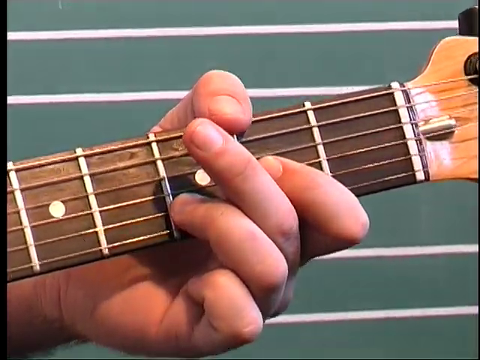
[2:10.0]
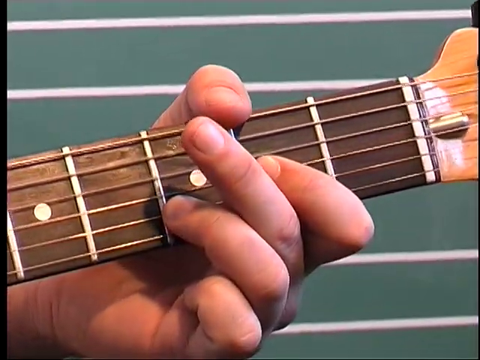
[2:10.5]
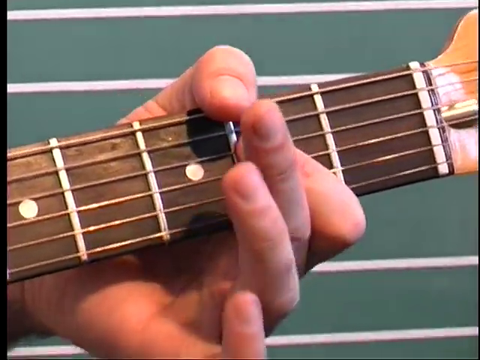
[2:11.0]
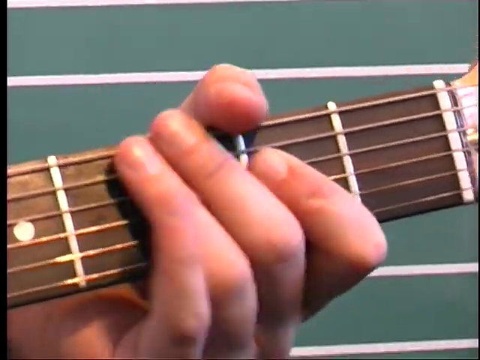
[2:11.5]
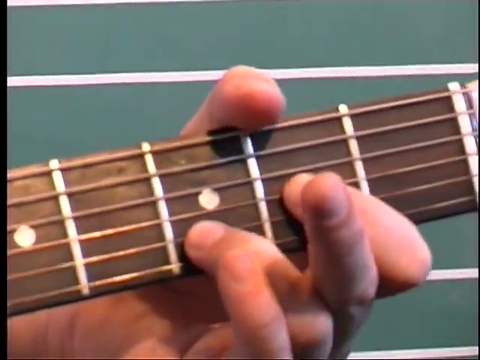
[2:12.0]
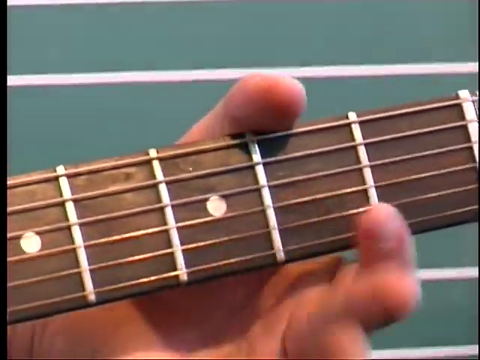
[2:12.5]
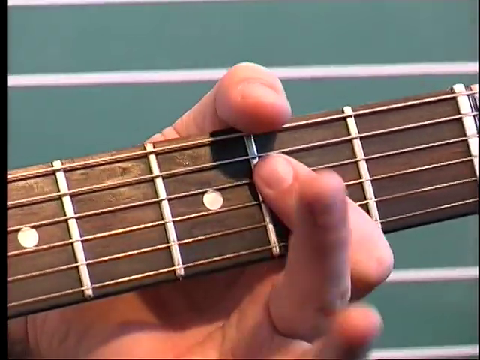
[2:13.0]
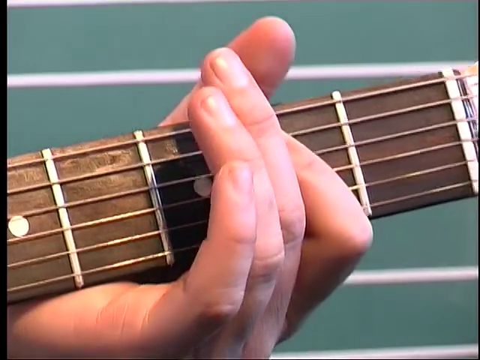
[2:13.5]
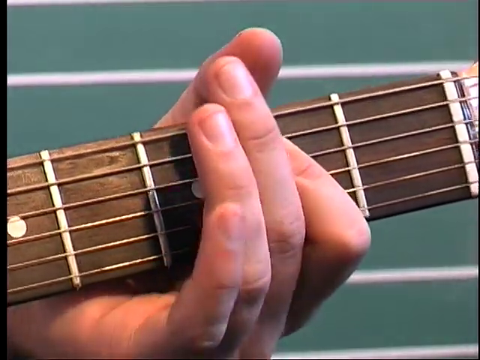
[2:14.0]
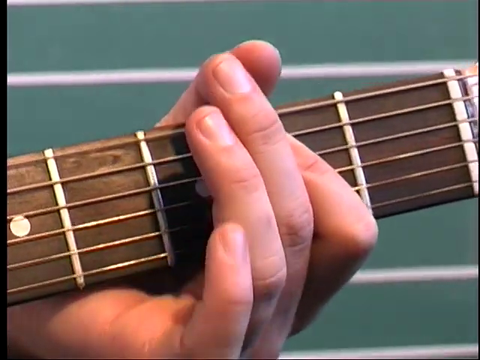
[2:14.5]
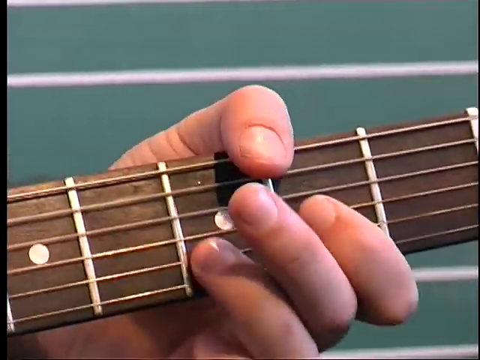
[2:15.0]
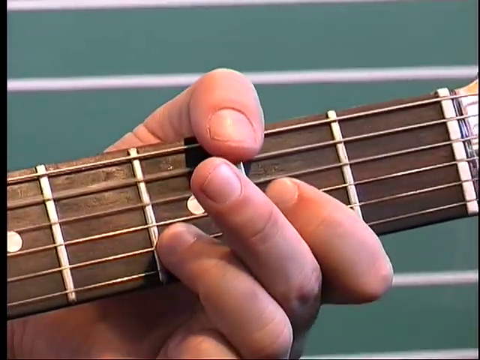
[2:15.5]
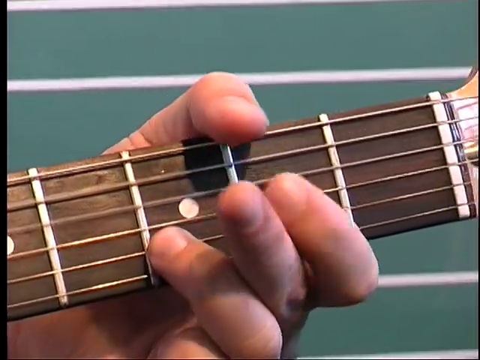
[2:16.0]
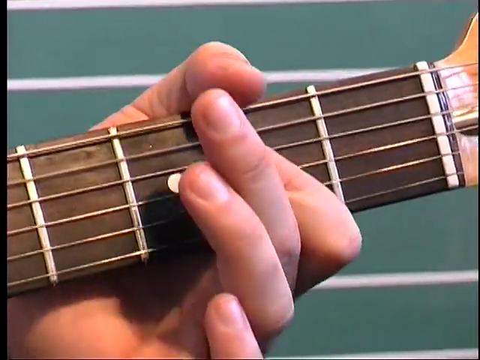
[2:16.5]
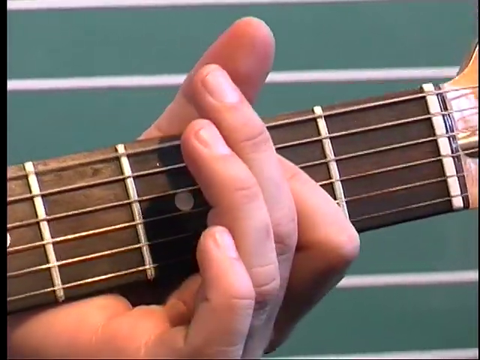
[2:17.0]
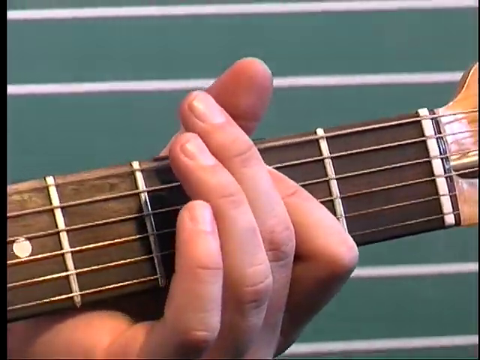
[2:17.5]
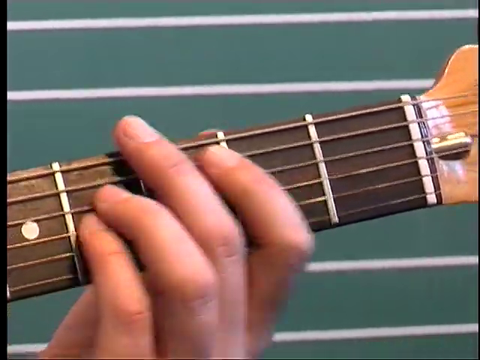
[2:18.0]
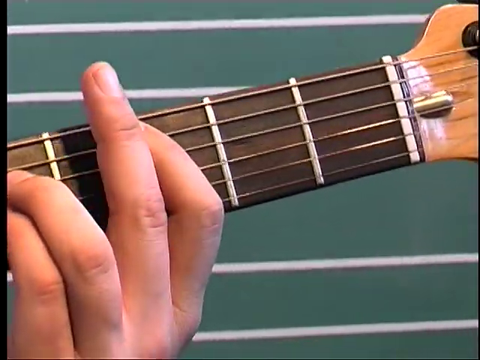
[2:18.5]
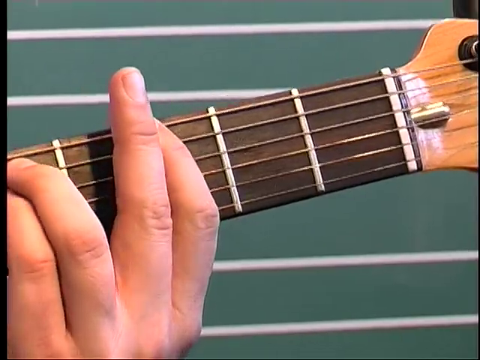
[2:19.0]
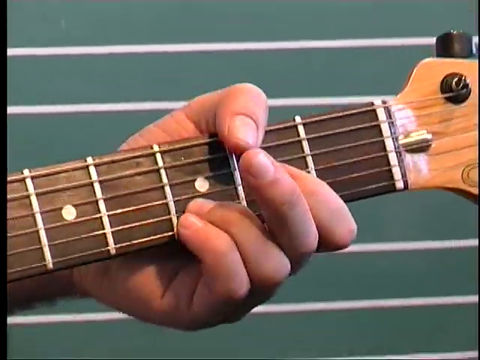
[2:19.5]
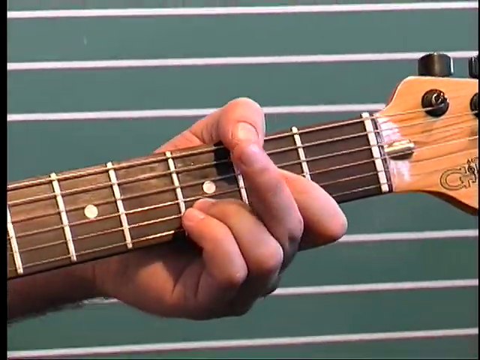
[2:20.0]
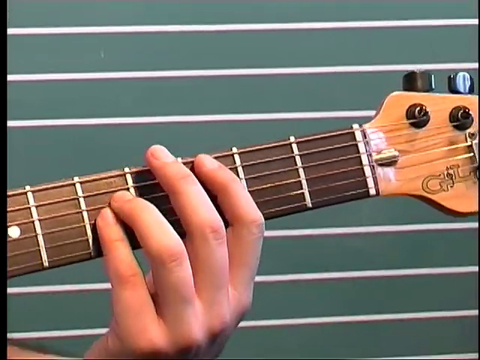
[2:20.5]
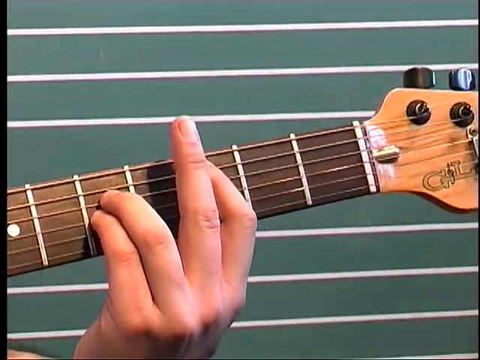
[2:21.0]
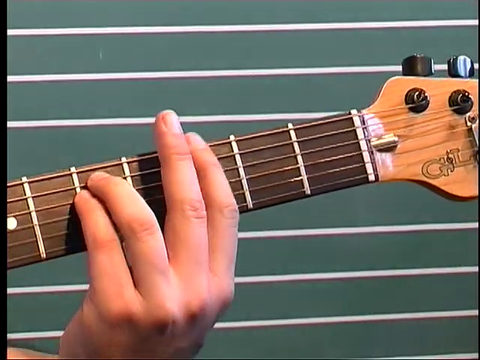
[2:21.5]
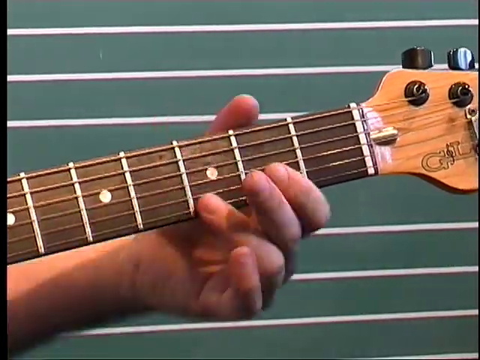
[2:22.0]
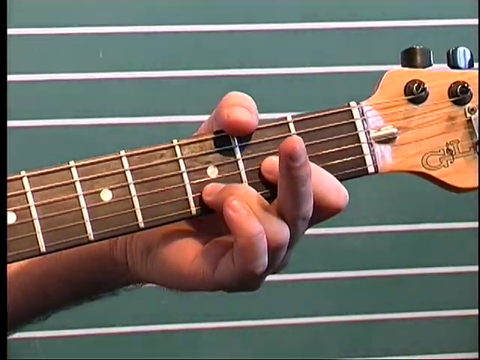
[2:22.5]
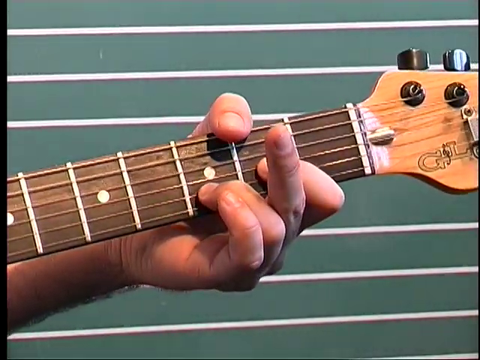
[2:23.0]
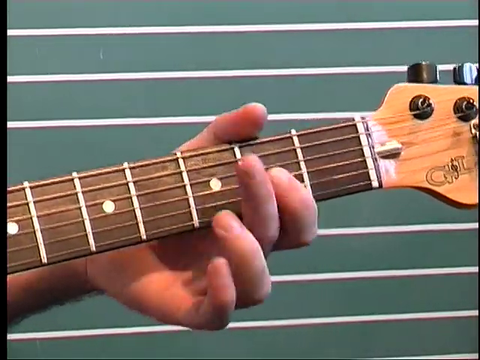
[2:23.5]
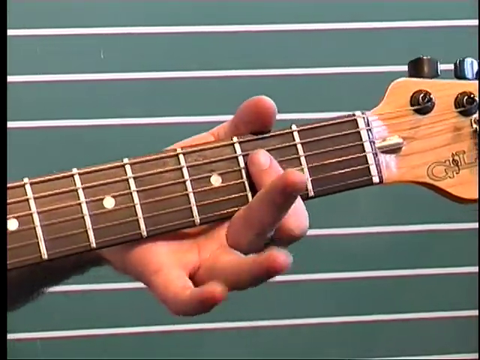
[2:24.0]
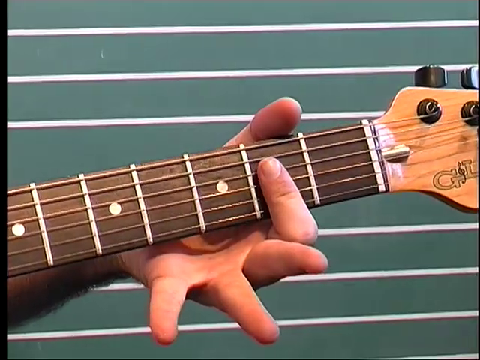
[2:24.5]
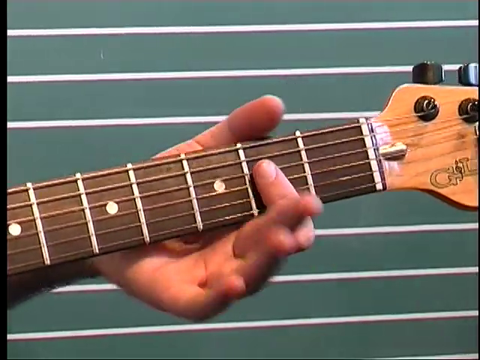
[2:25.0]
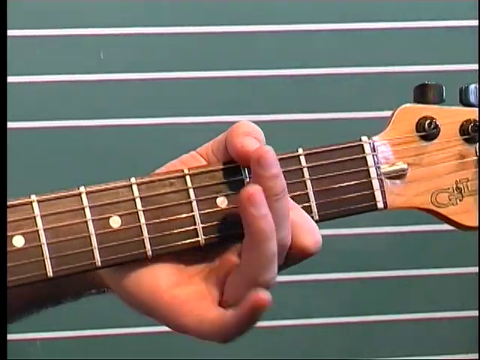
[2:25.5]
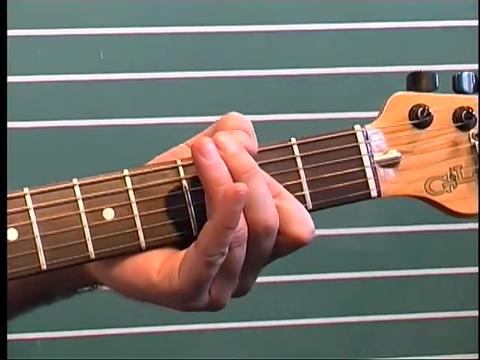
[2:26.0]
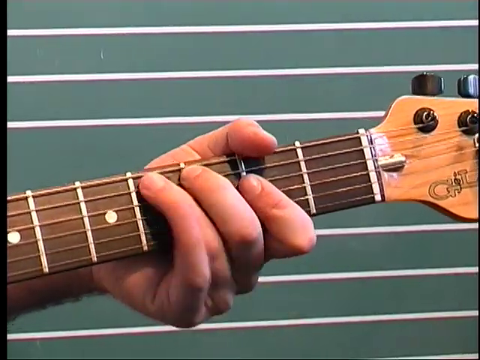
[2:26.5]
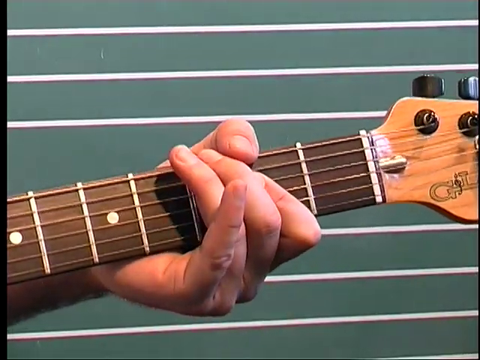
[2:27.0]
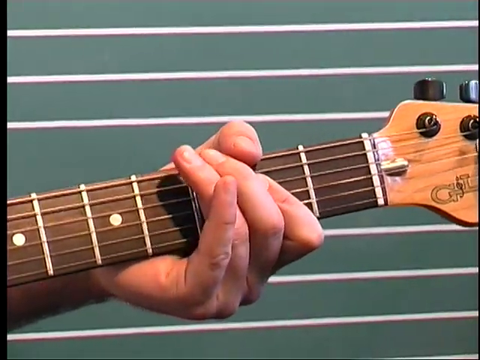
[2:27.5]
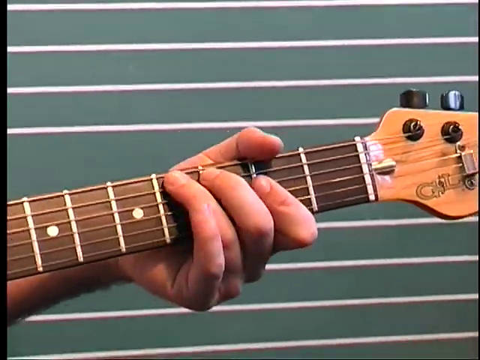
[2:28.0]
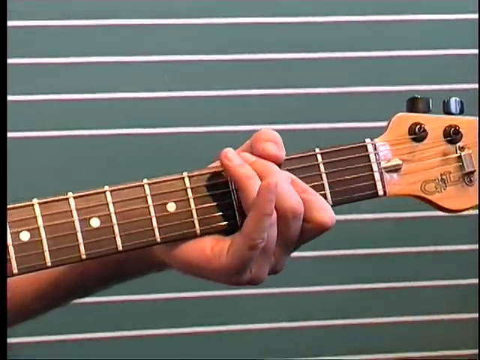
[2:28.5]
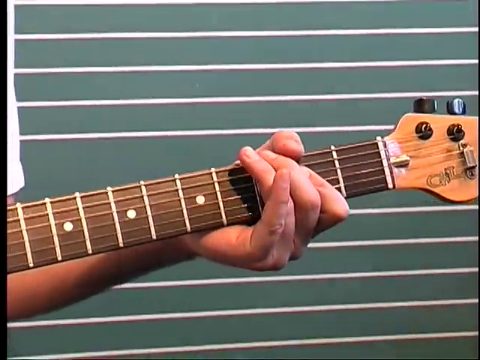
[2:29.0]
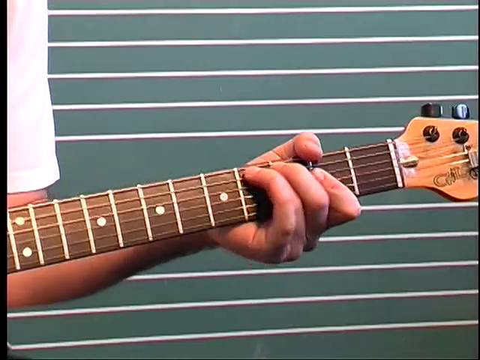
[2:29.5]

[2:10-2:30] A close-up shows someone's hand wrapped around the long, narrow neck of a guitar, placed almost at the end near the tuners. The fingers press down on different notes somewhat slowly and clearly, using pretty much all fingers from thumb to pinky and sometimes a tapping movement on the neck, in a close-up demonstration of the notes and chords for the song. The background is a green chalkboard with white lines across it in groups like those on sheet music. The camera then pans back out a little to show more of the guitar player, who is wearing a short-sleeve white shirt.